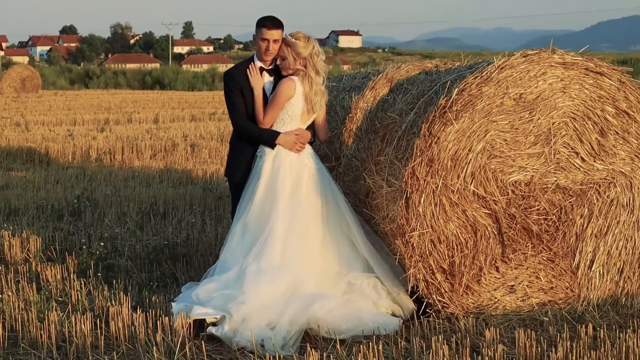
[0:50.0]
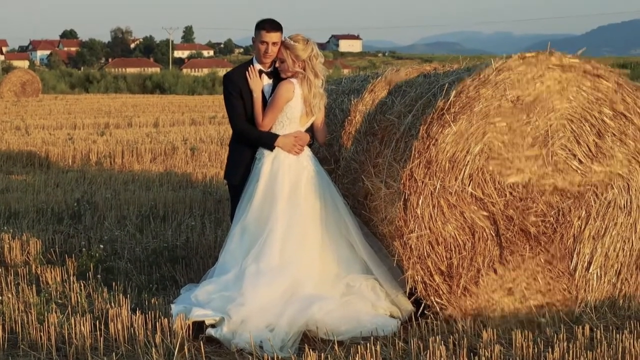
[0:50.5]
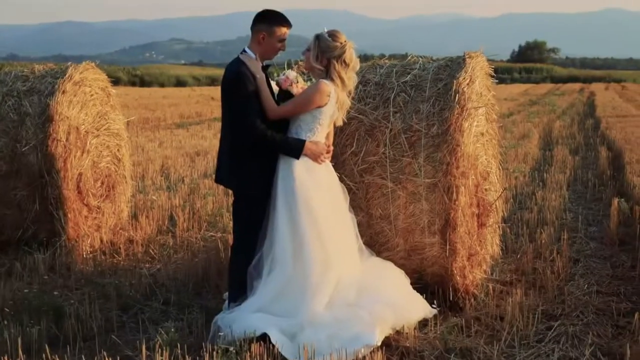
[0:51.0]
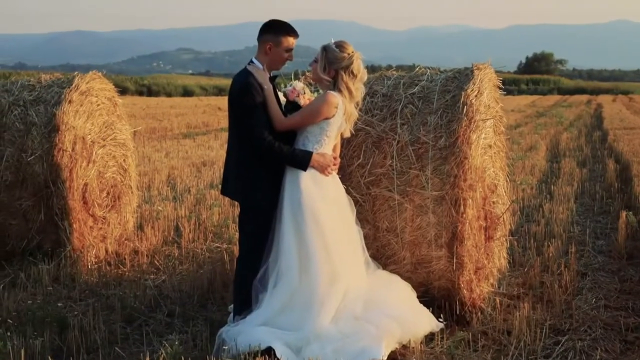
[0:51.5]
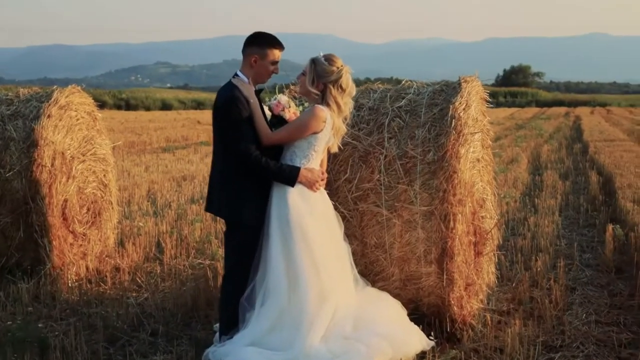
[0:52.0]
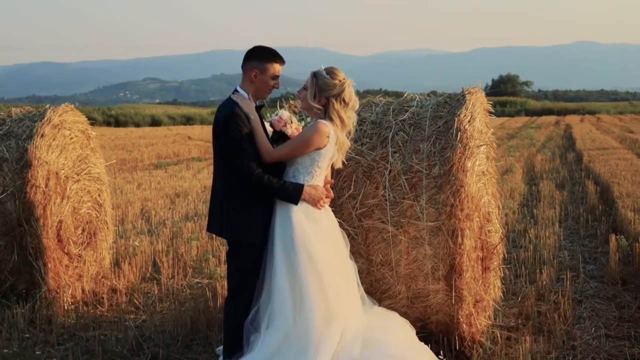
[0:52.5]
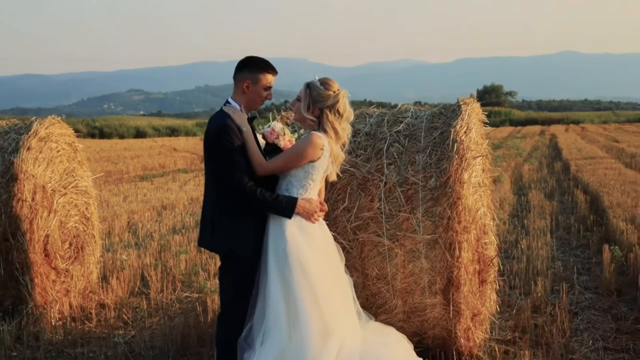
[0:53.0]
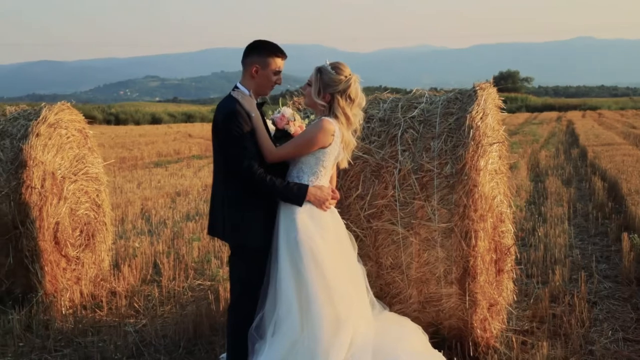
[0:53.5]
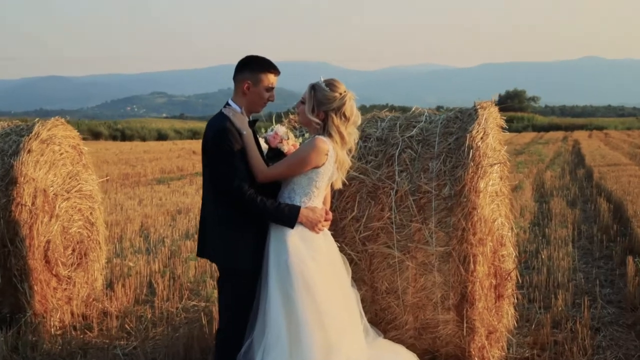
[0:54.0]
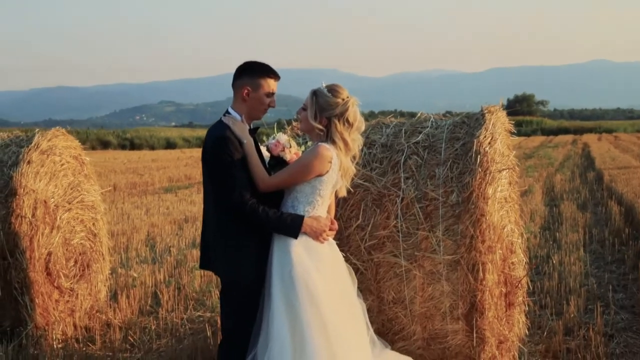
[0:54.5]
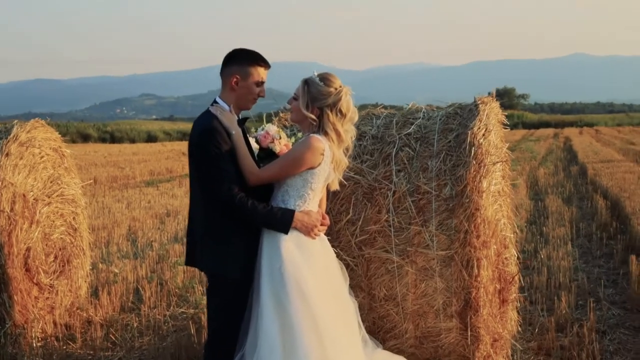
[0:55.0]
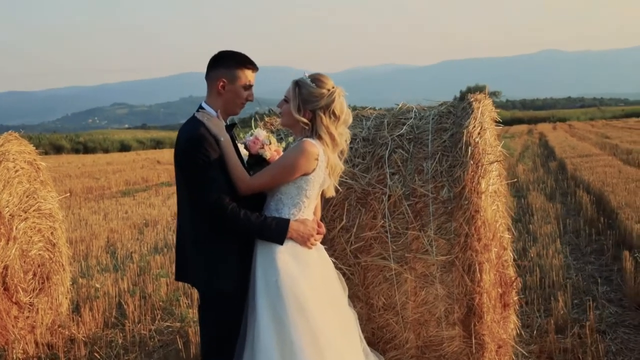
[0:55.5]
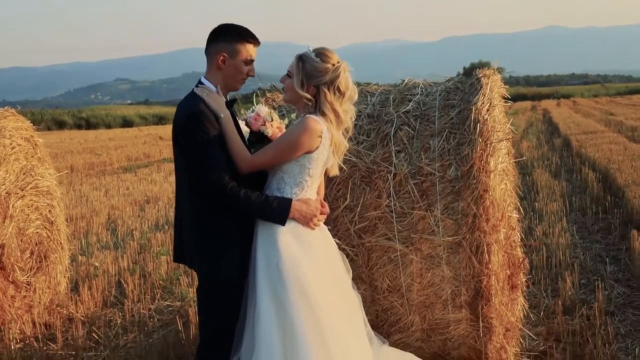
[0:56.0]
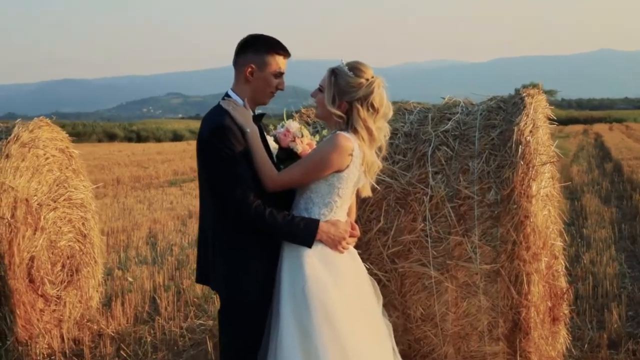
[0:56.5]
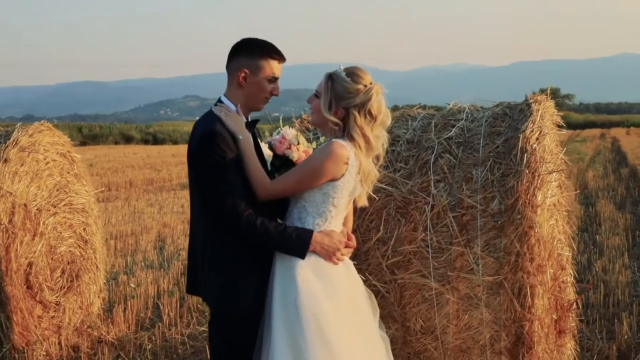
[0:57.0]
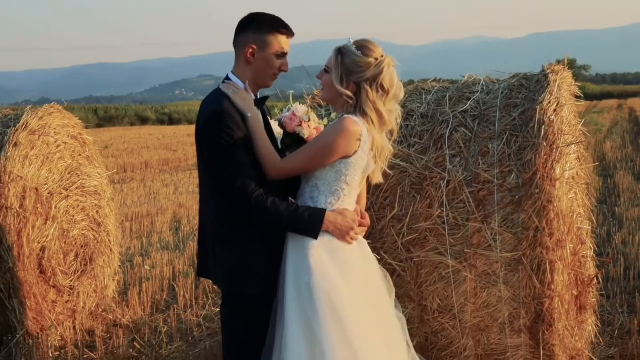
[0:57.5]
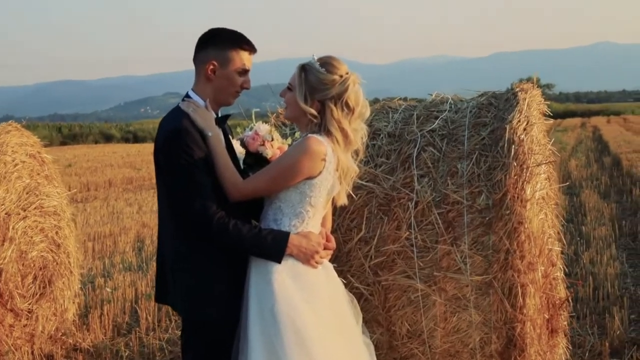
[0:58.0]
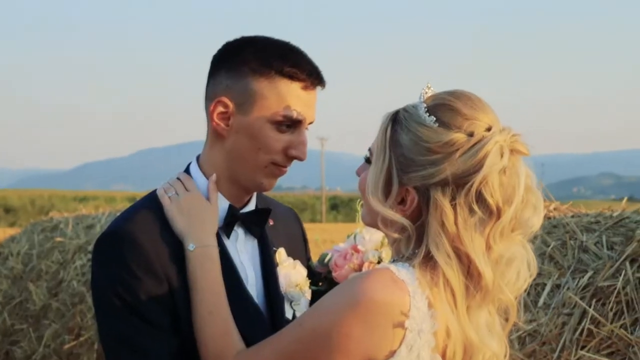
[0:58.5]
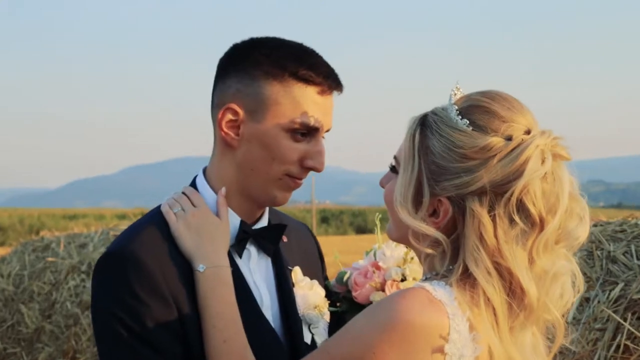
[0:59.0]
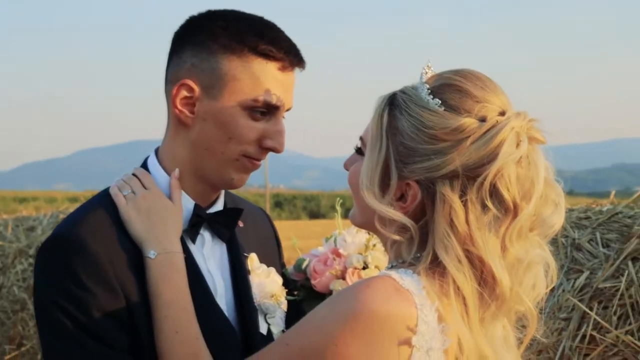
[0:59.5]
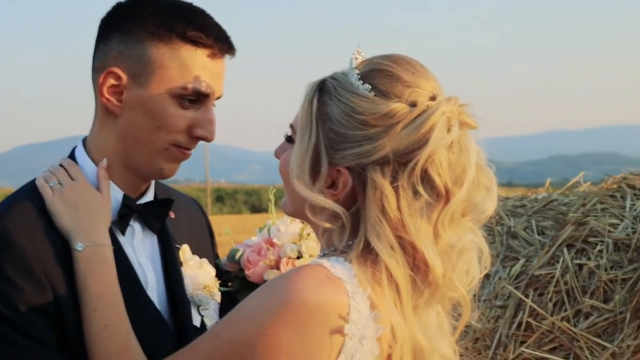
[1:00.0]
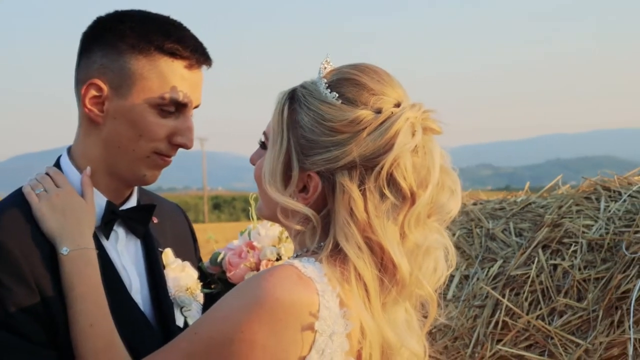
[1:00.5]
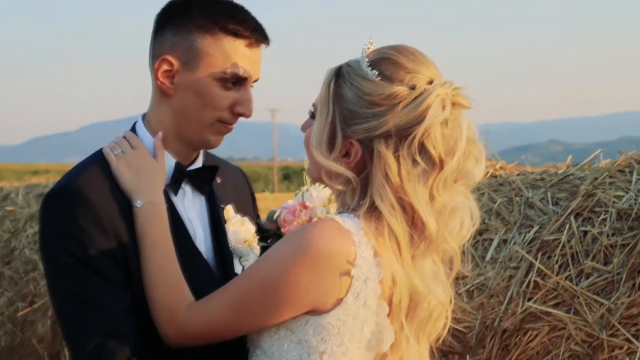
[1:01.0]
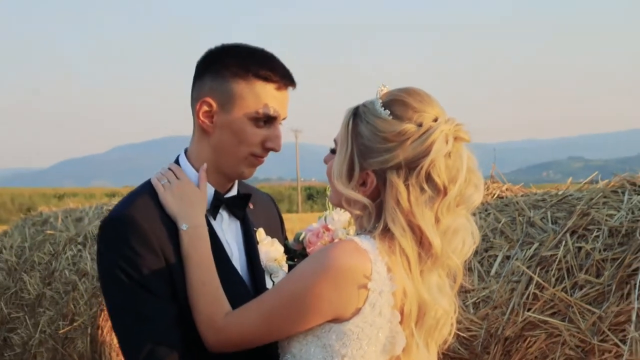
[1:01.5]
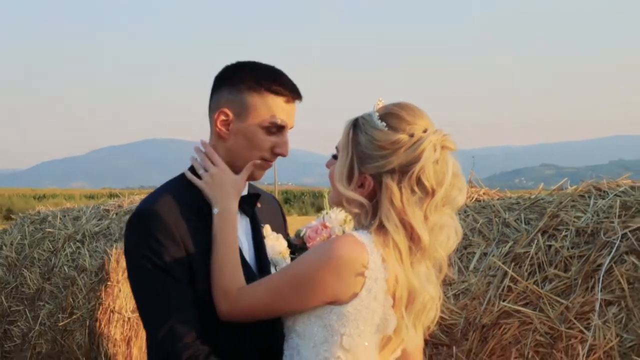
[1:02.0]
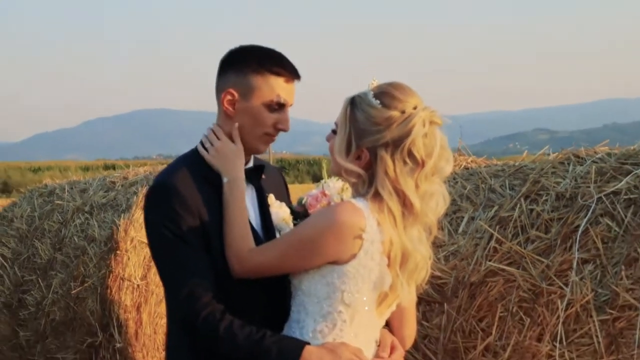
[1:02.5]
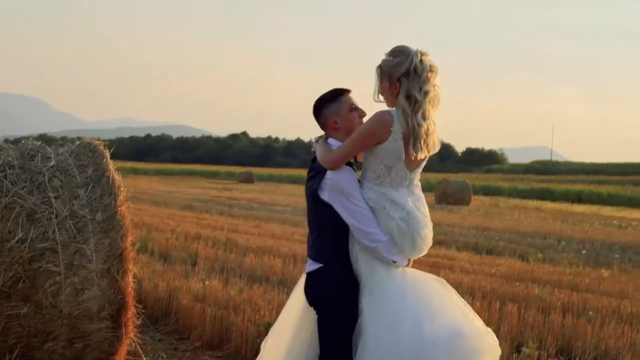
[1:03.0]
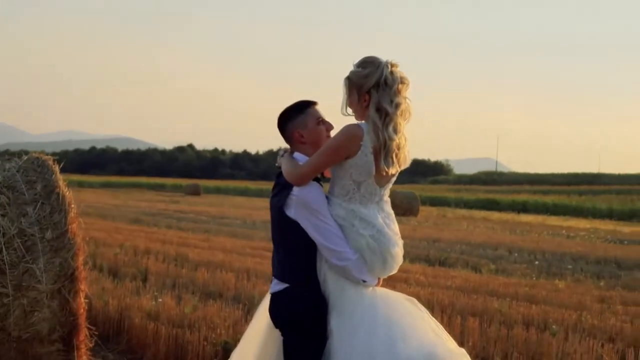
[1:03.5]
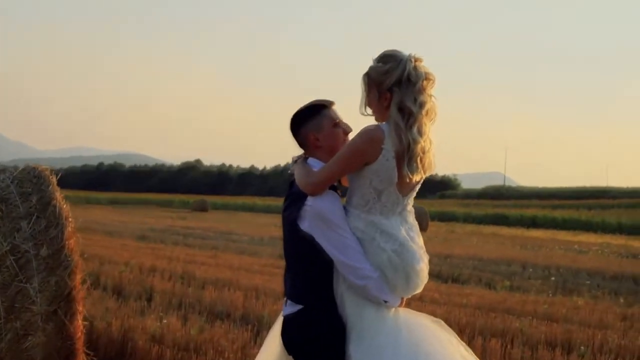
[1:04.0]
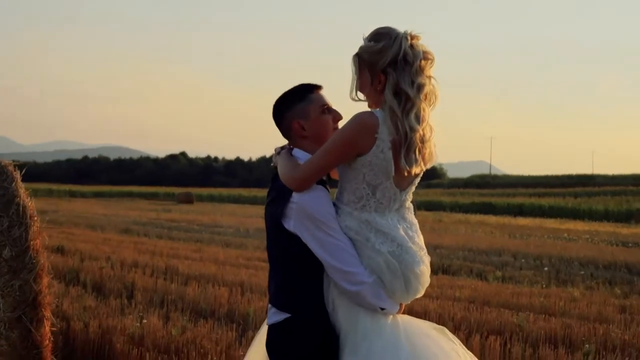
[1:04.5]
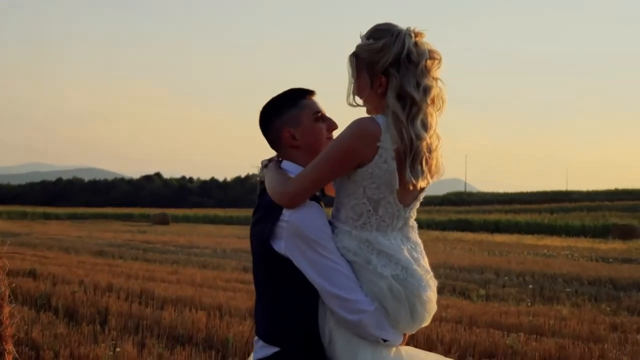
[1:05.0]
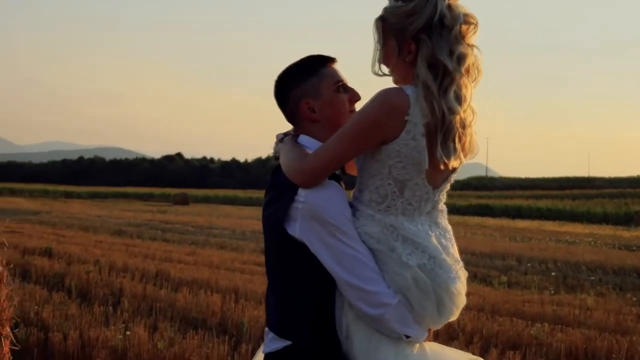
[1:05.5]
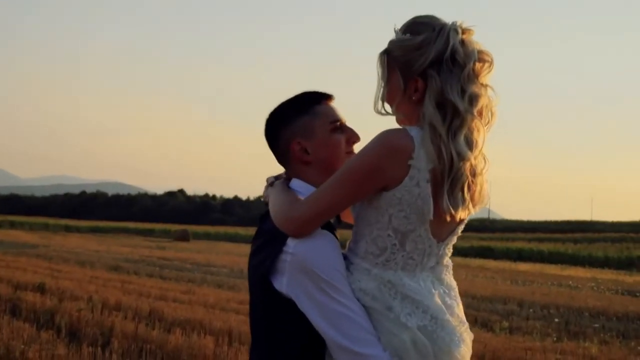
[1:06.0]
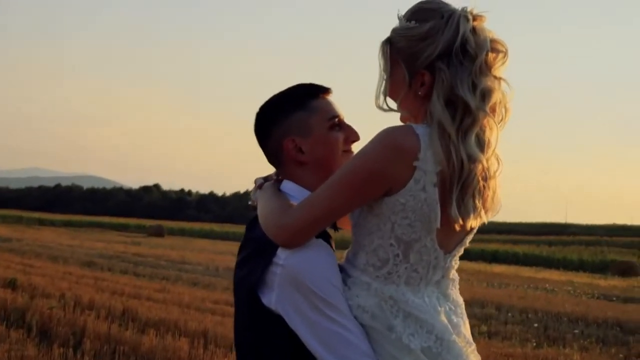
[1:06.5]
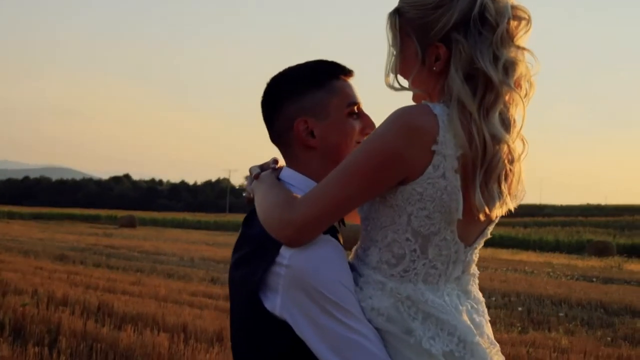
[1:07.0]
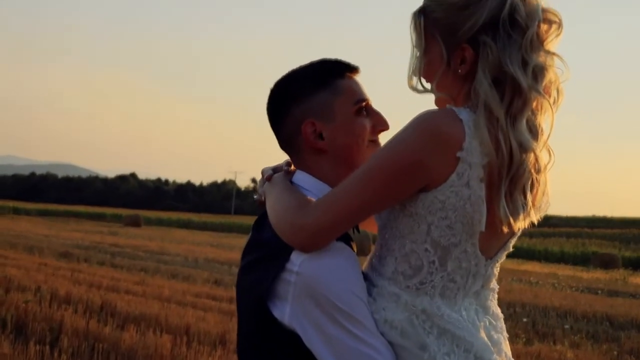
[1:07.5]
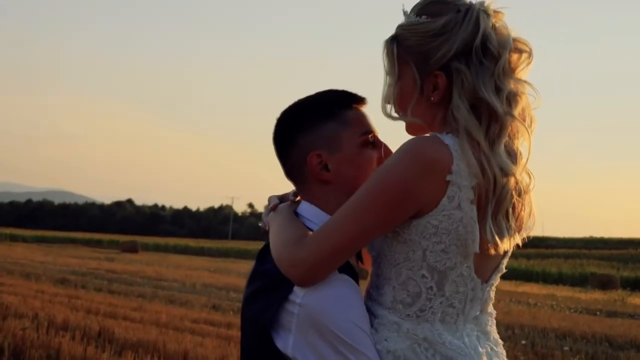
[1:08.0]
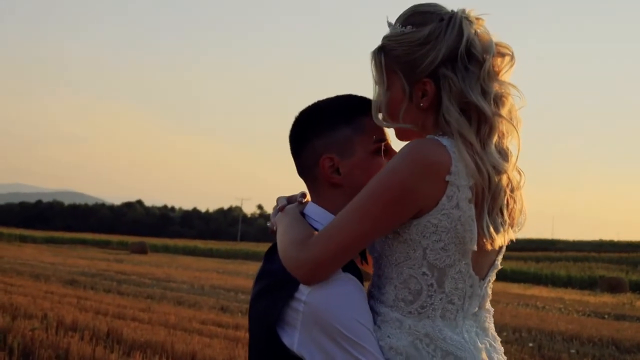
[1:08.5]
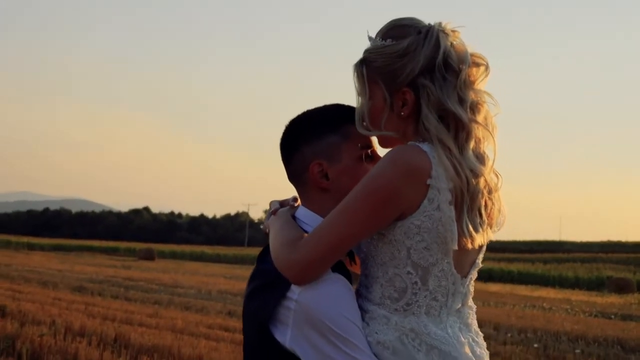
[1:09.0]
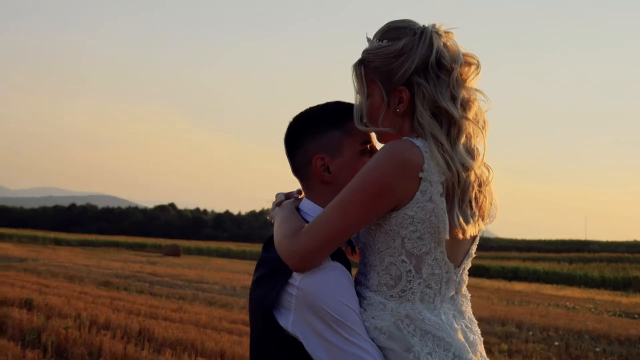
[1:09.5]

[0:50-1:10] In the field, the couple gaze at each other, kind of smiling, and she holds his face. He has picked her up and holds her in his arms while she kisses his forehead. The sun is setting a little more and it is getting darker. The view is closer, with rolling mountains, green countryside and the setting sun in the background.